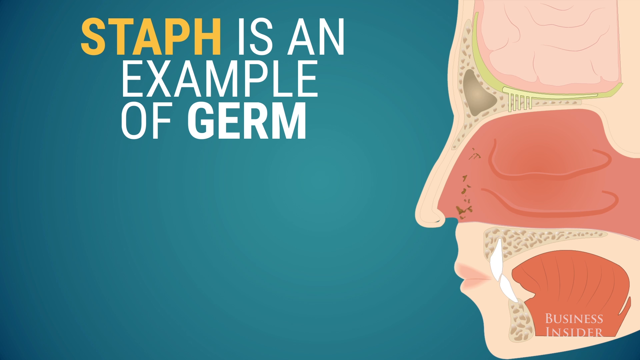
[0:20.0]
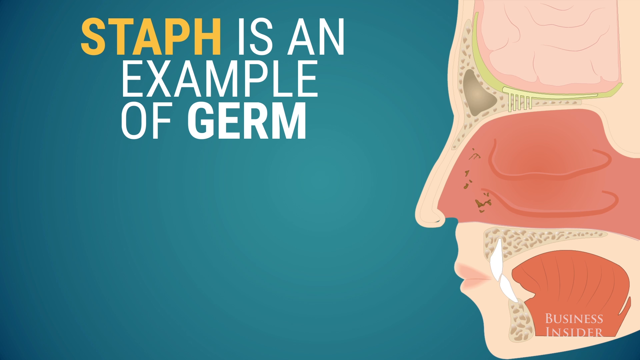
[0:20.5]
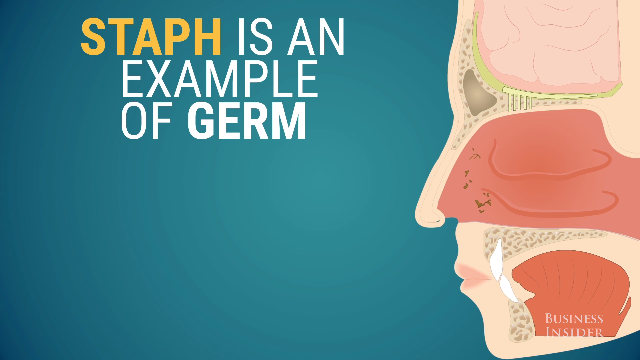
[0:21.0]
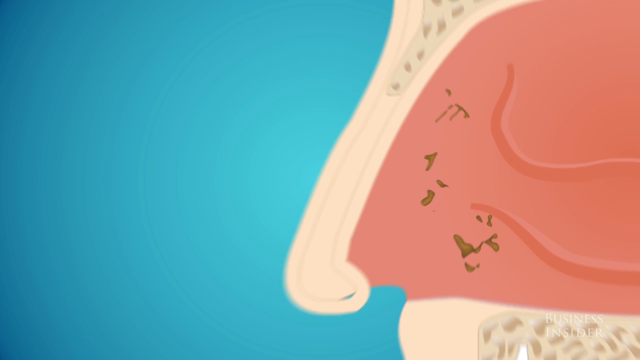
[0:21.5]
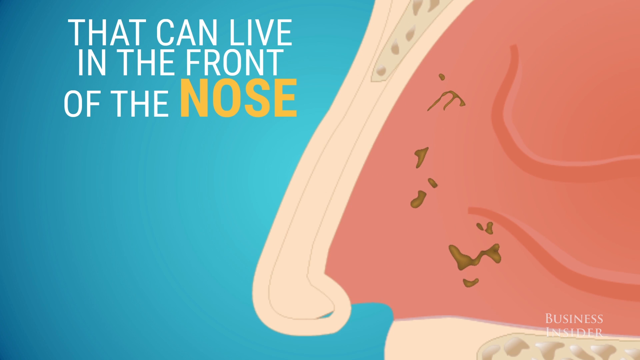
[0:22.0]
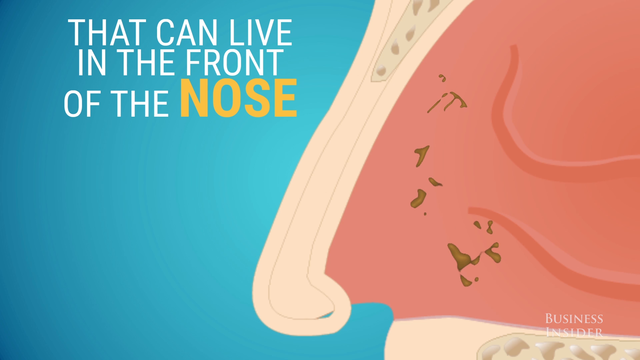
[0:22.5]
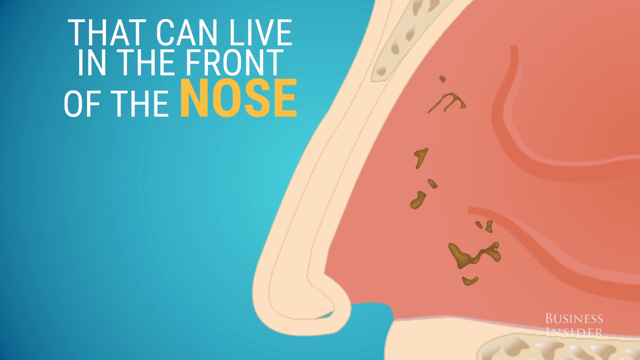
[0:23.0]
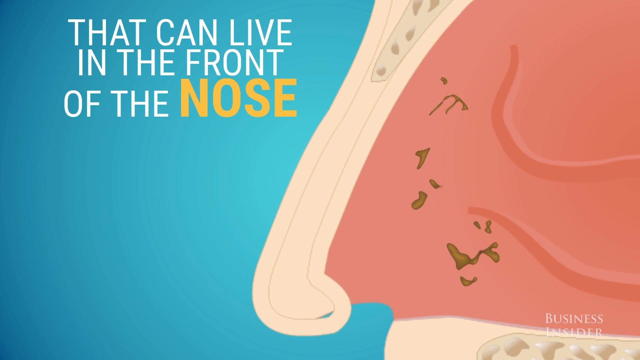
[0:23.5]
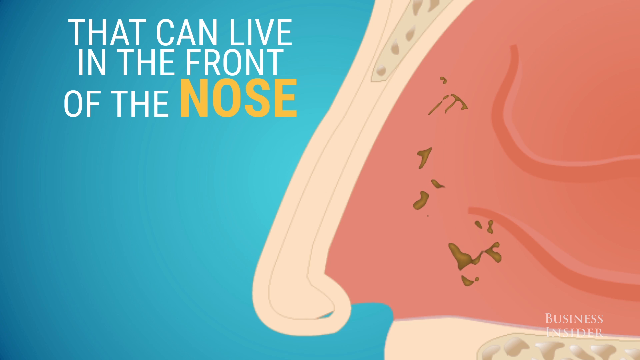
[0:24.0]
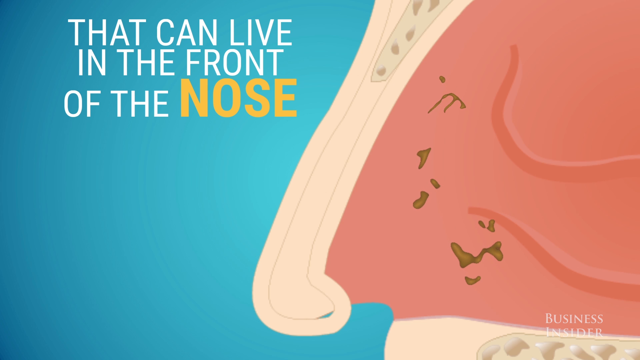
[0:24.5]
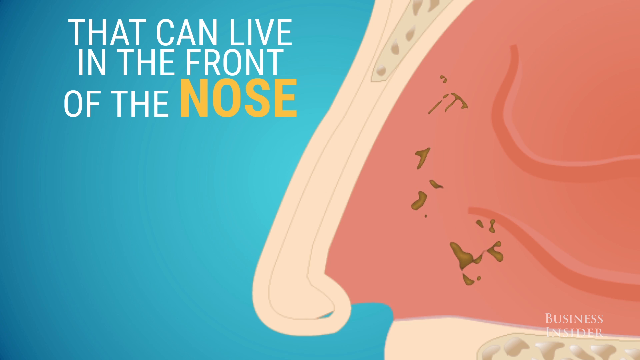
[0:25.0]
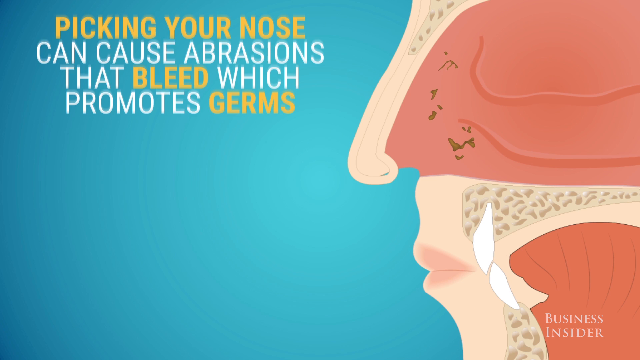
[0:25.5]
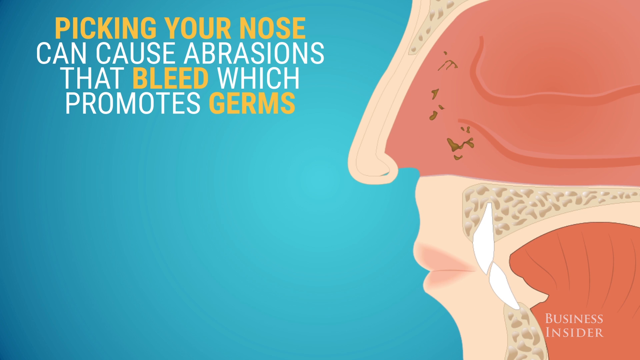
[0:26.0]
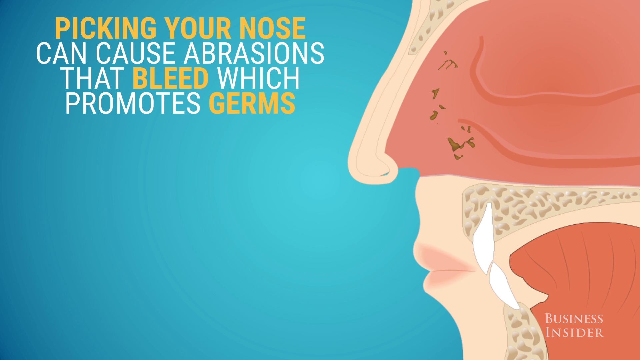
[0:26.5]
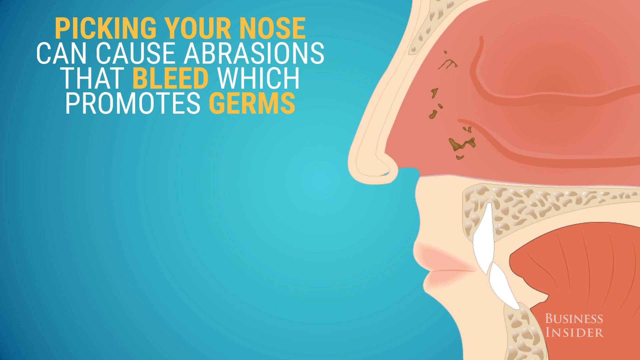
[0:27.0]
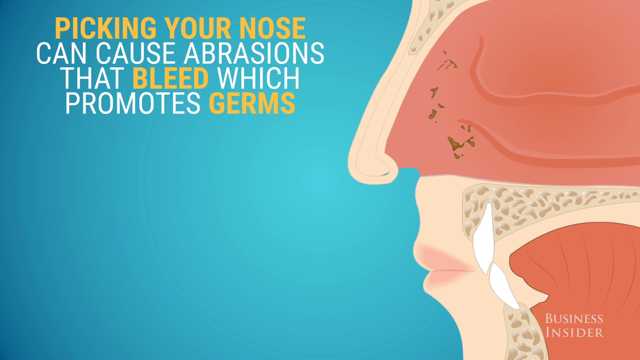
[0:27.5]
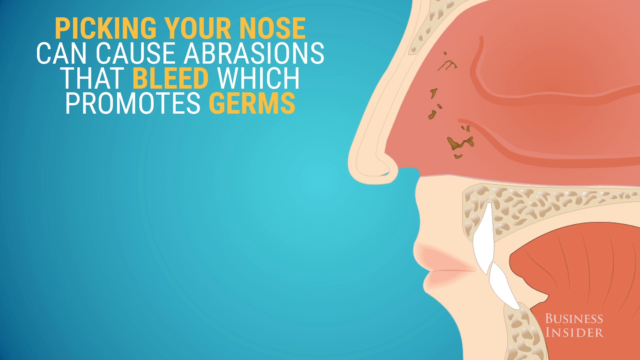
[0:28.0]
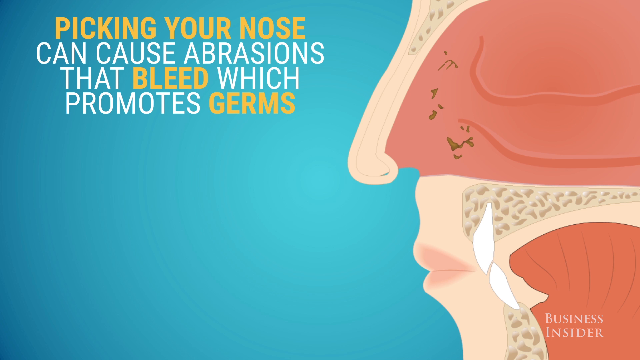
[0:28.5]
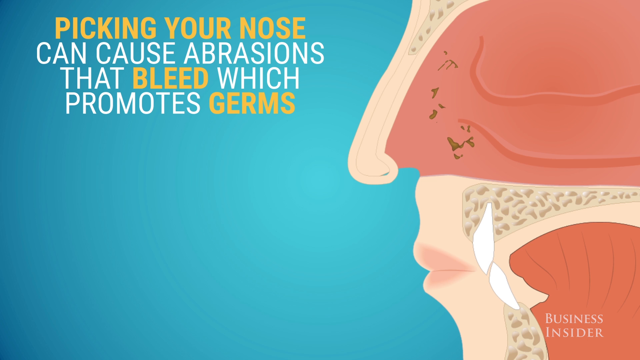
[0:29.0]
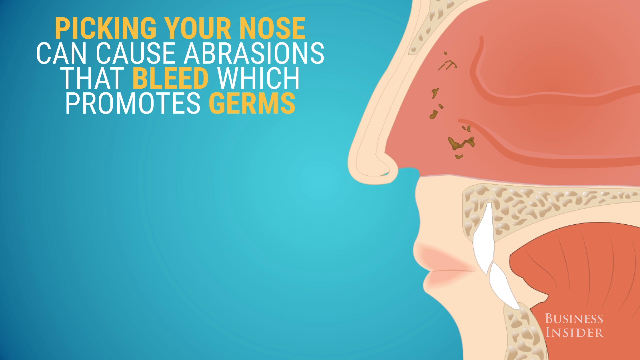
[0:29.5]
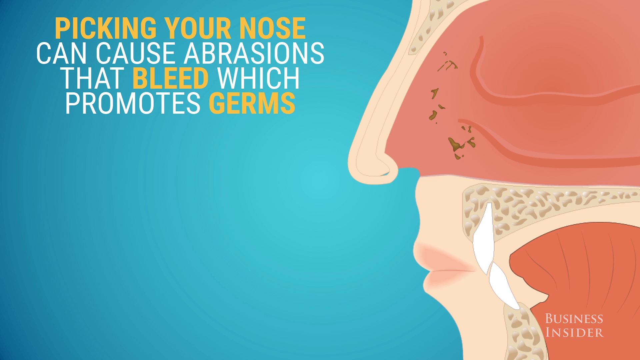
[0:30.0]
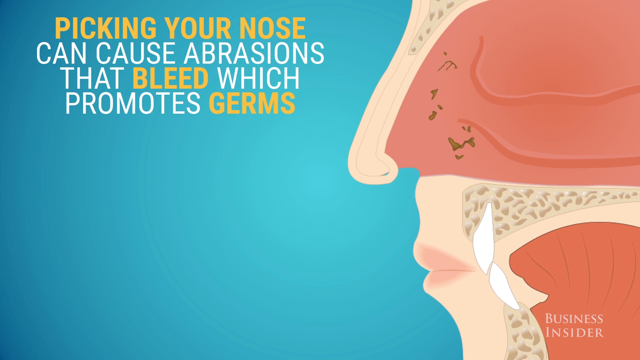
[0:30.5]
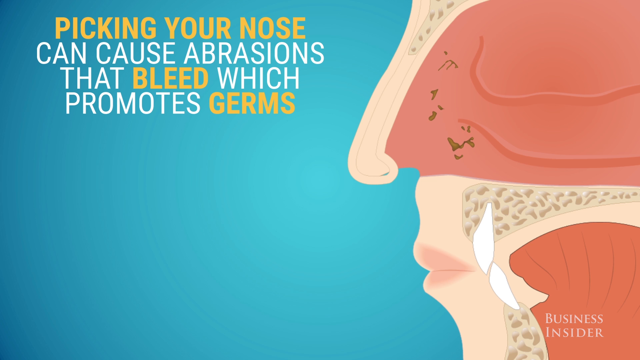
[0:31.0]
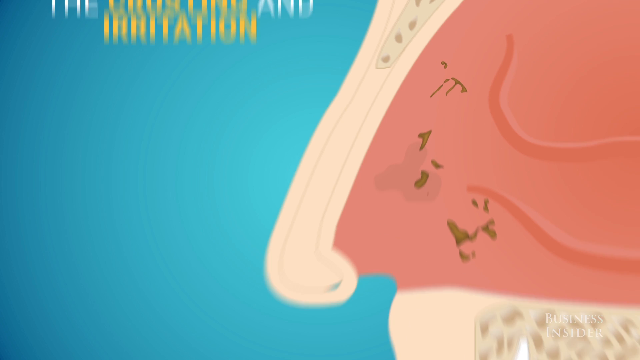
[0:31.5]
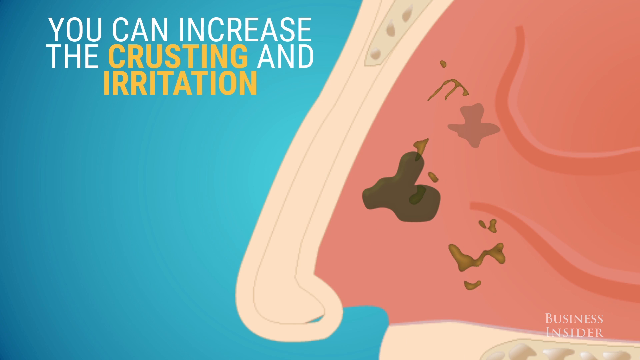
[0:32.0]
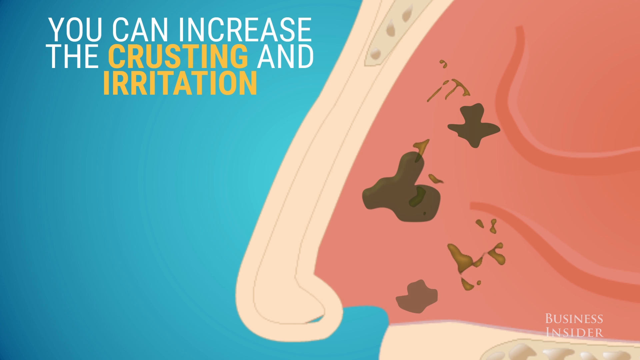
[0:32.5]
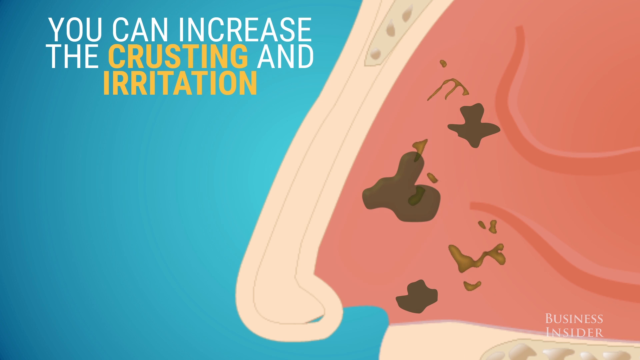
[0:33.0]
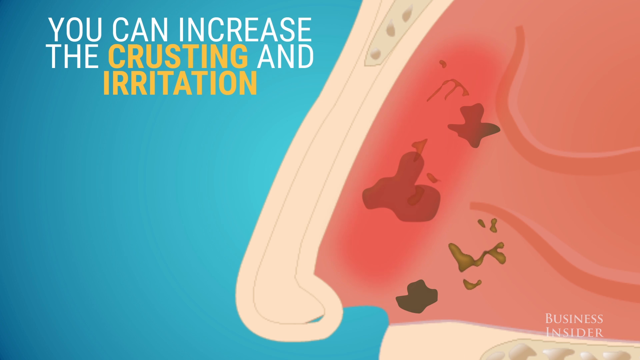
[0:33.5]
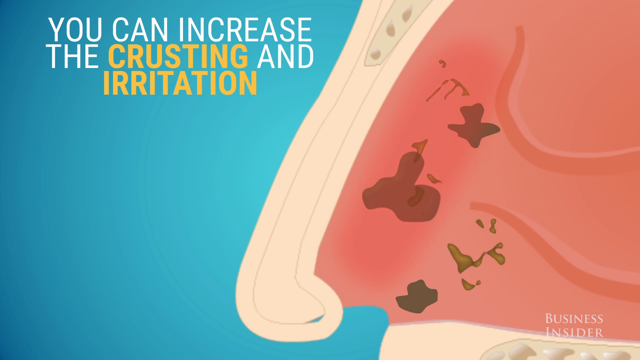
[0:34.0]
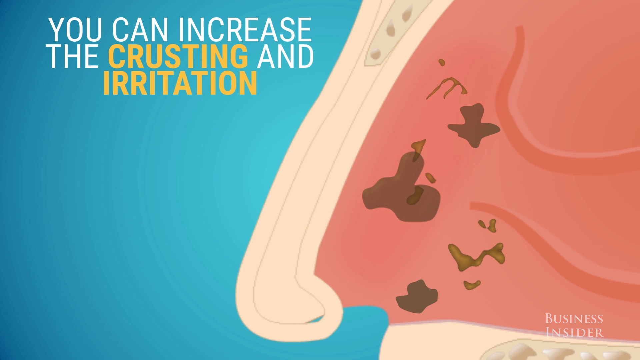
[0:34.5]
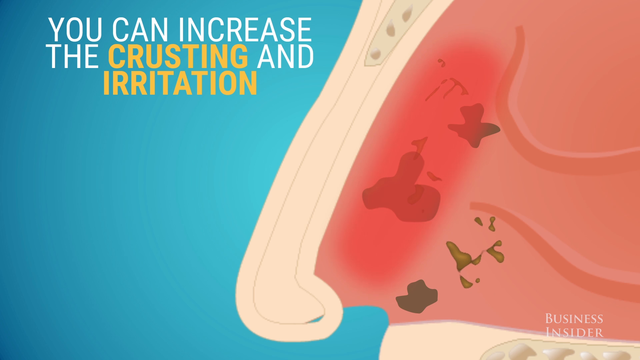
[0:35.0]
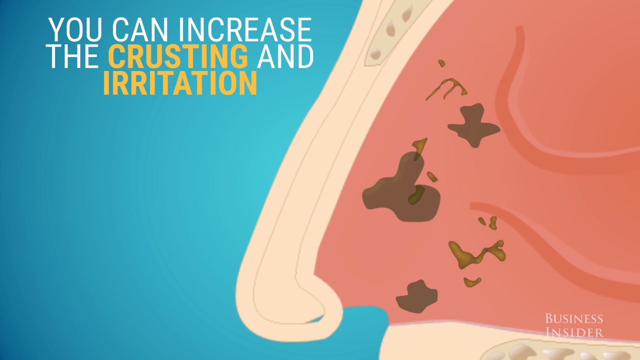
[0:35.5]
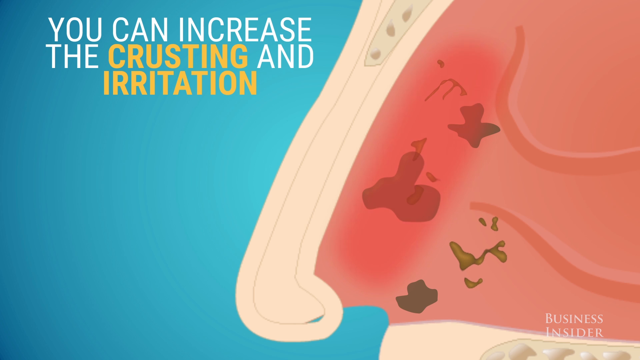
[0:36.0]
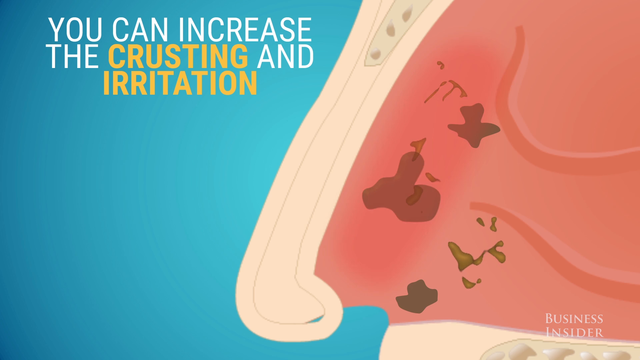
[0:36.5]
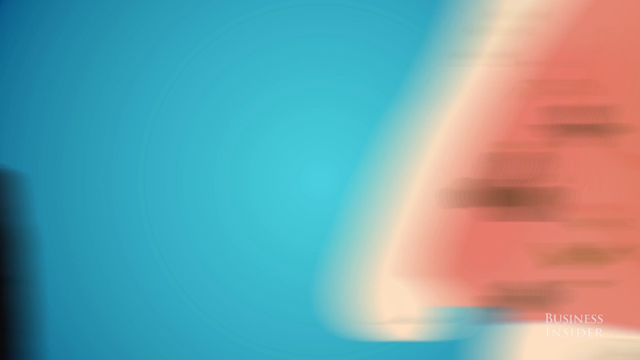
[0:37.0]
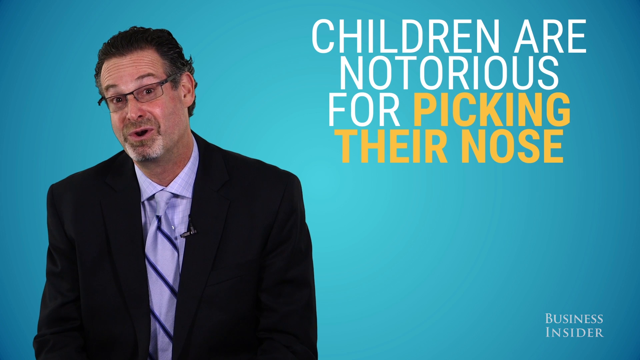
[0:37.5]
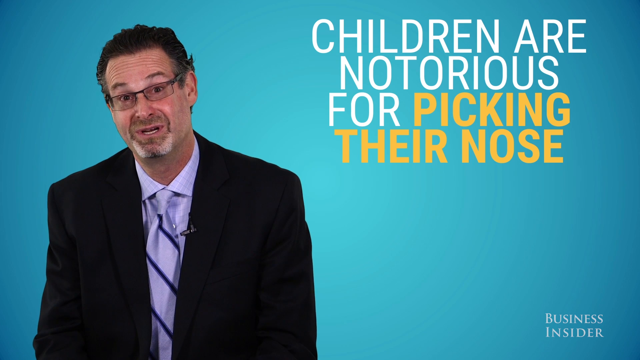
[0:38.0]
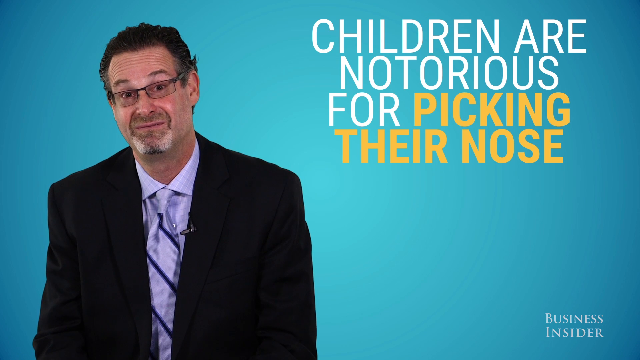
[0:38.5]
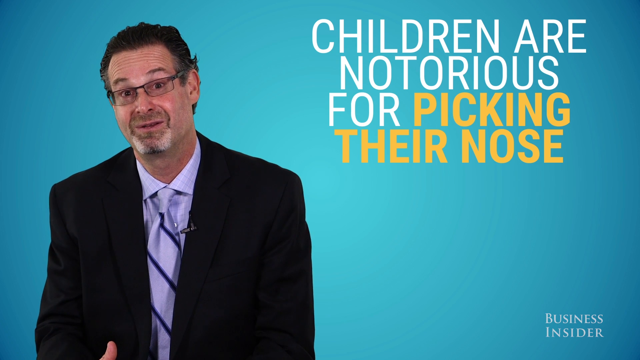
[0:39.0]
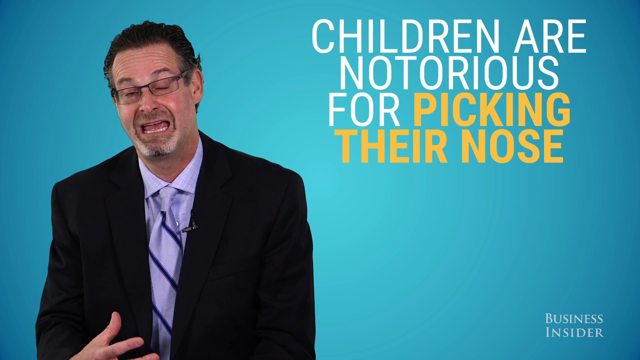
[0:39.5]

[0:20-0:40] The scene continues on the text "staph is an example of germ," with a human diagram on the right. A little dust and germs fly in and travel up into the nose, and the 3D view shows the germs inside the nose. Text reads "these germs that can live in the front of the nose," all in white except "nose," which is slightly bigger and yellow. Brownish germs float around on the pink diagram, clearly marking their location in the nose. Text on the left then reads "picking your nose can cause abrasions that bleed, which promotes germs," with "picking your nose," "bleed," and "germs" in yellow and the rest in white. The diagram stays still except for the brown germs floating in the nose. More brown appears, showing crusting, and text reads "you can increase the crusting and irritation," with "crusting and irritation" in yellow and the rest in white. Part of the nose flashes red, indicating where scratching can cause issues. Text then reads "children notorious for picking their nose," with "picking their nose" in yellow and the rest in white.